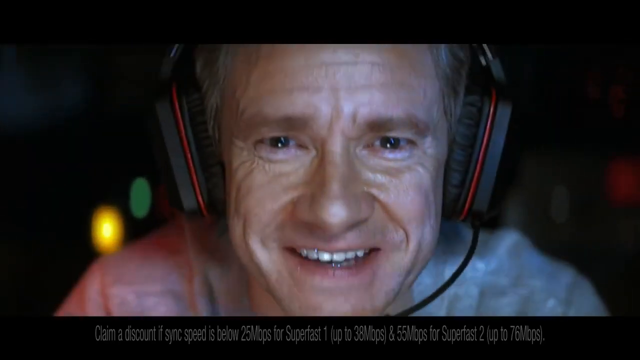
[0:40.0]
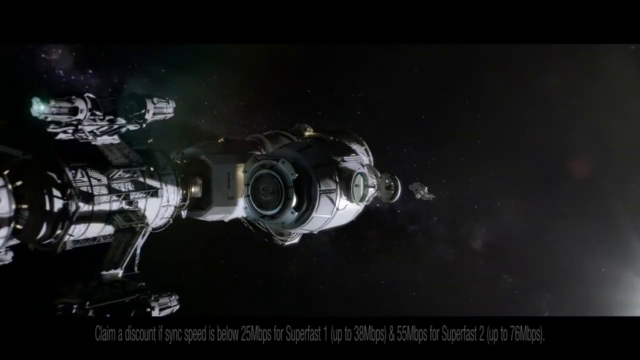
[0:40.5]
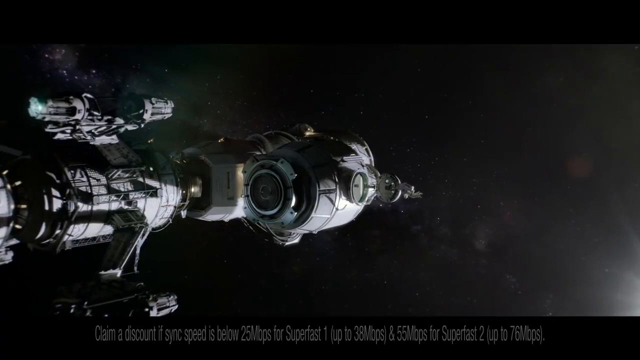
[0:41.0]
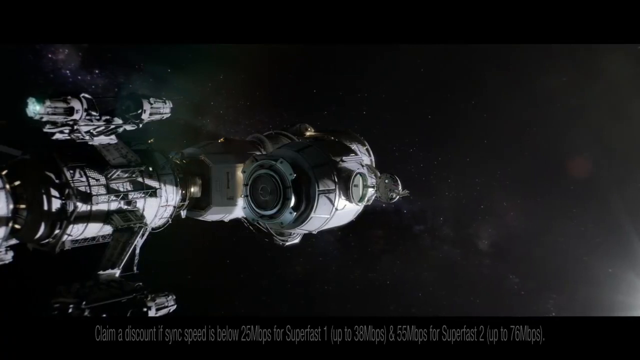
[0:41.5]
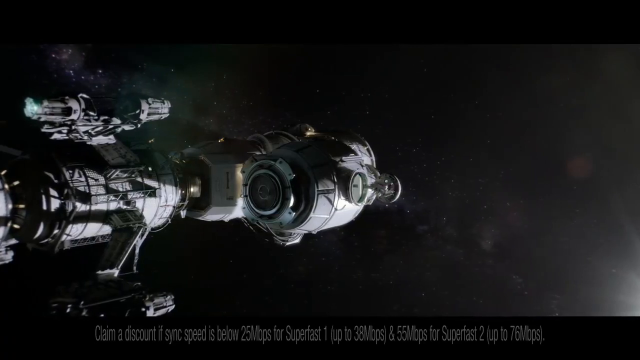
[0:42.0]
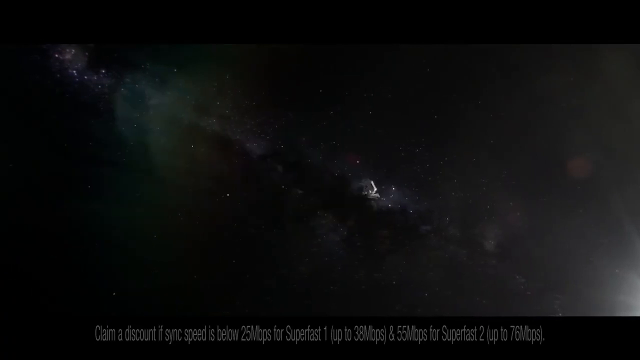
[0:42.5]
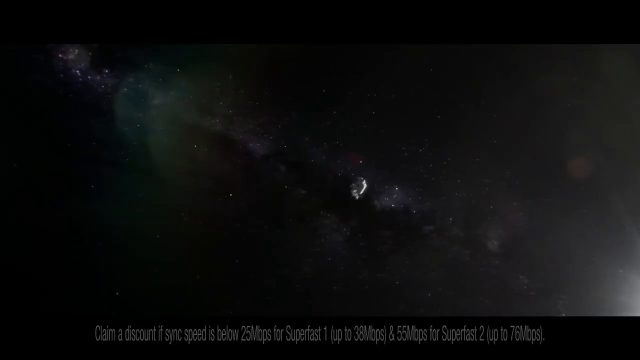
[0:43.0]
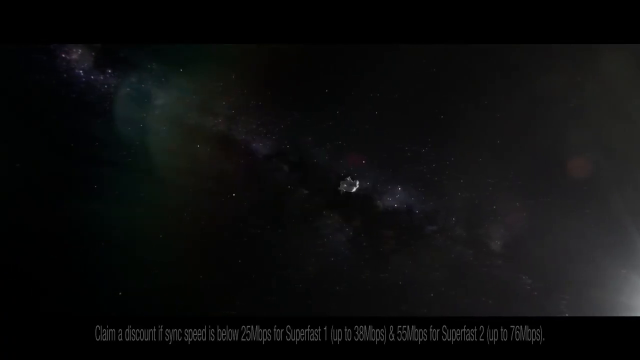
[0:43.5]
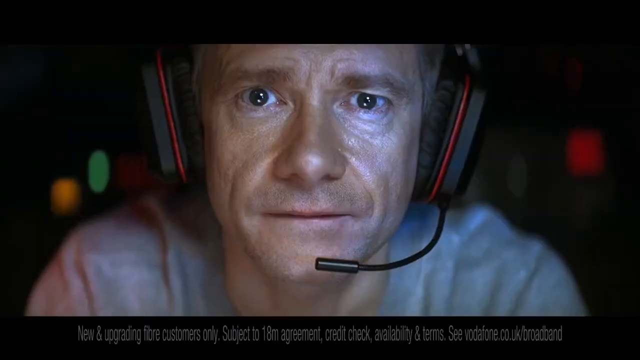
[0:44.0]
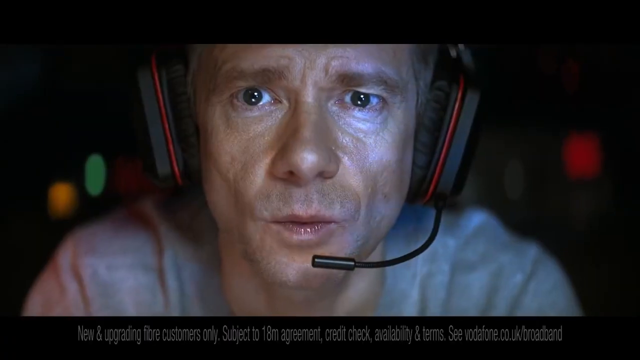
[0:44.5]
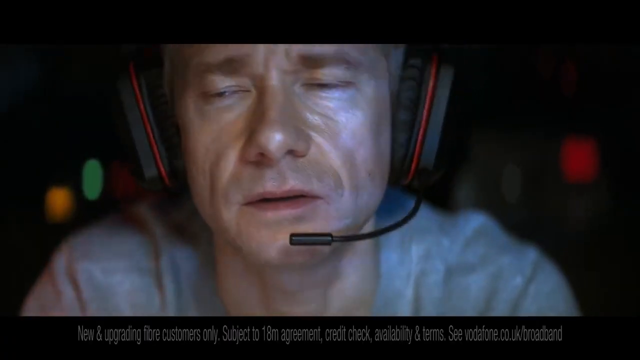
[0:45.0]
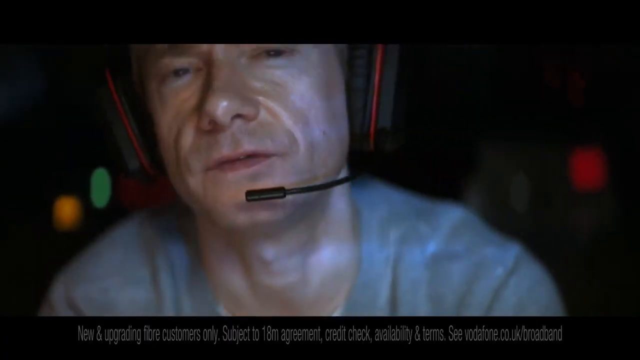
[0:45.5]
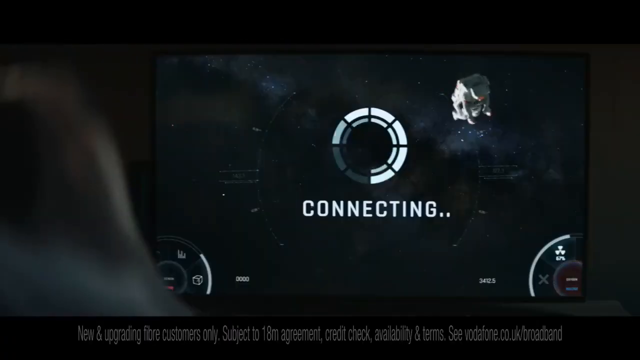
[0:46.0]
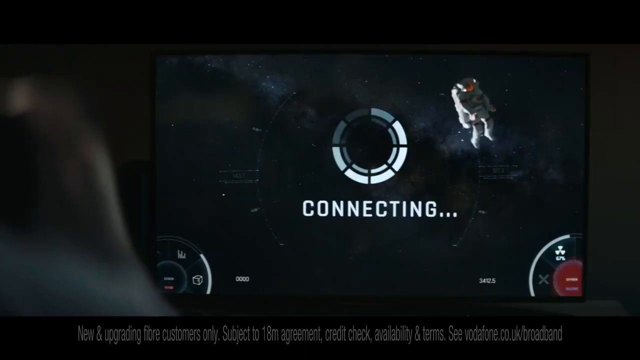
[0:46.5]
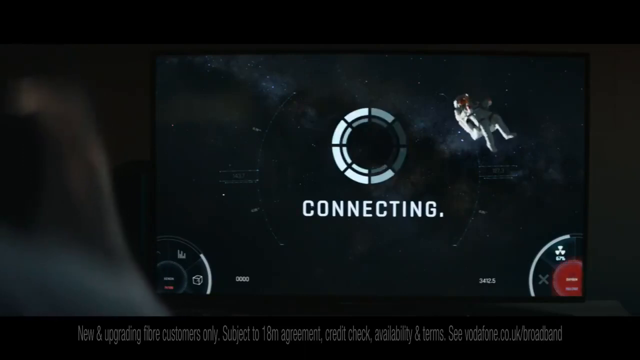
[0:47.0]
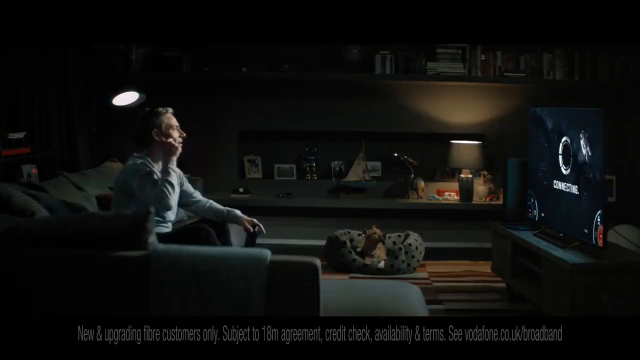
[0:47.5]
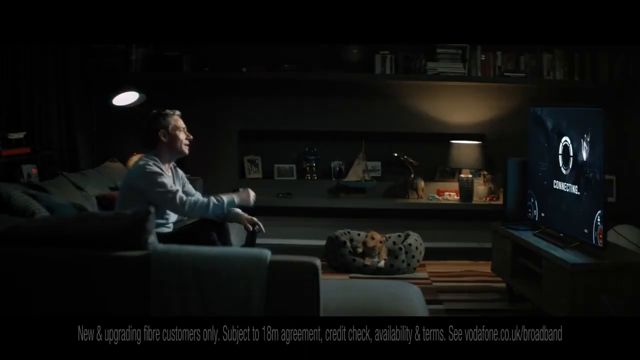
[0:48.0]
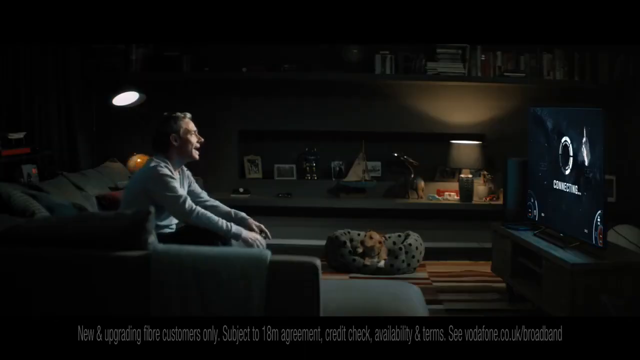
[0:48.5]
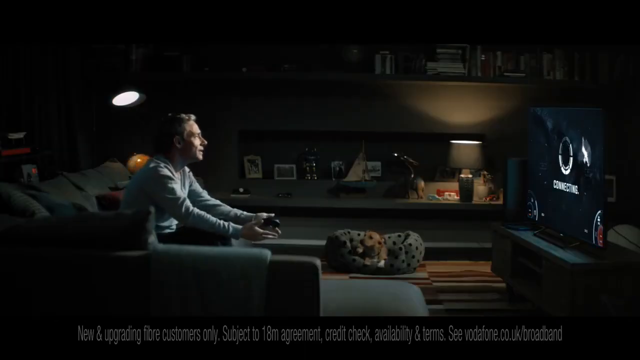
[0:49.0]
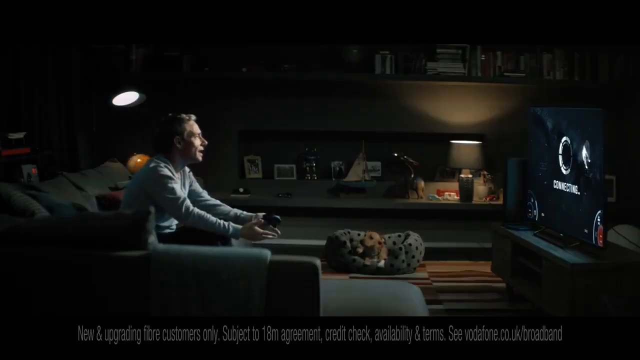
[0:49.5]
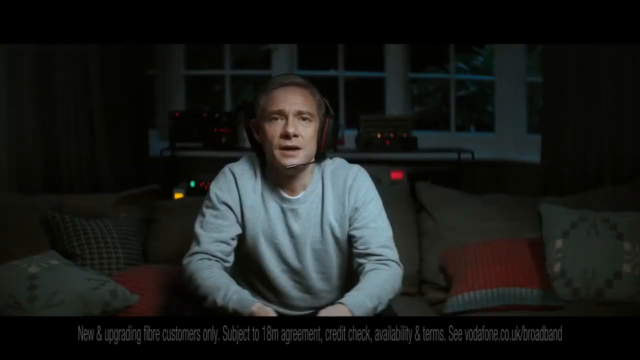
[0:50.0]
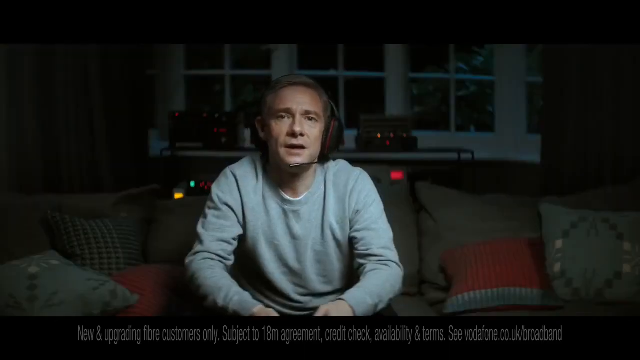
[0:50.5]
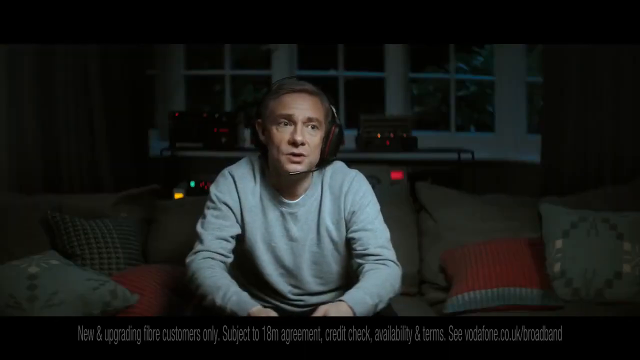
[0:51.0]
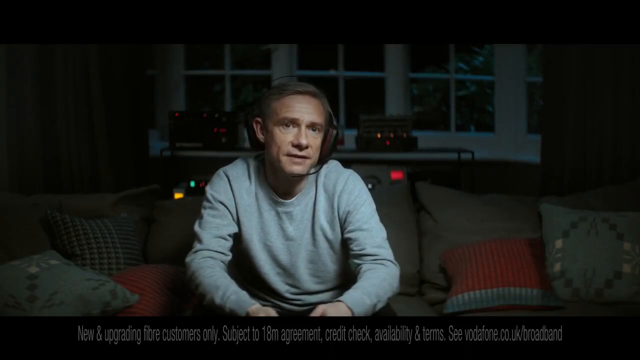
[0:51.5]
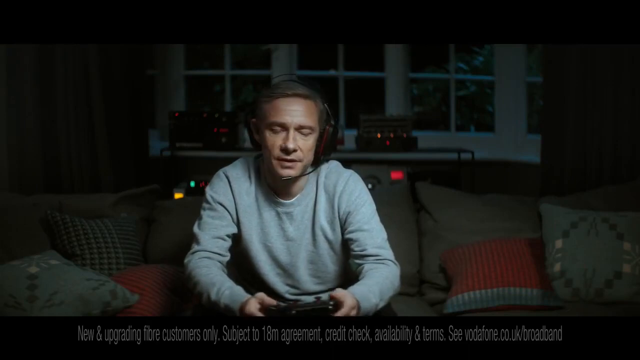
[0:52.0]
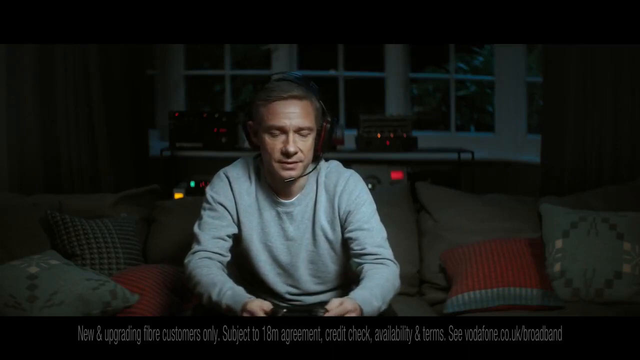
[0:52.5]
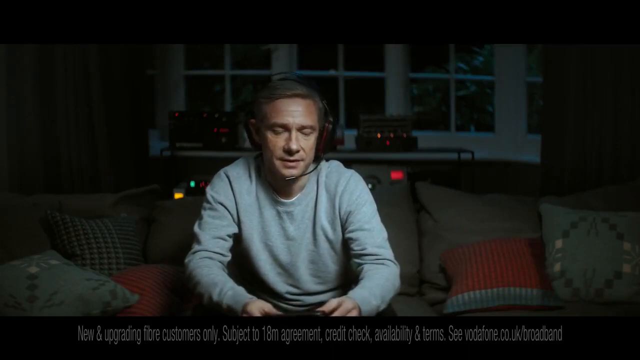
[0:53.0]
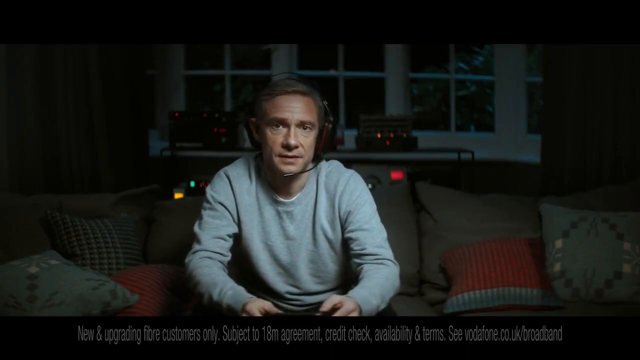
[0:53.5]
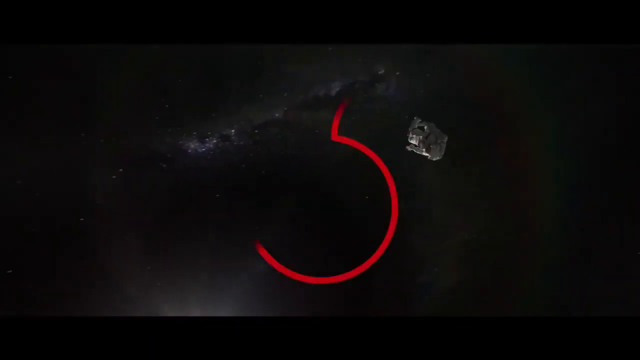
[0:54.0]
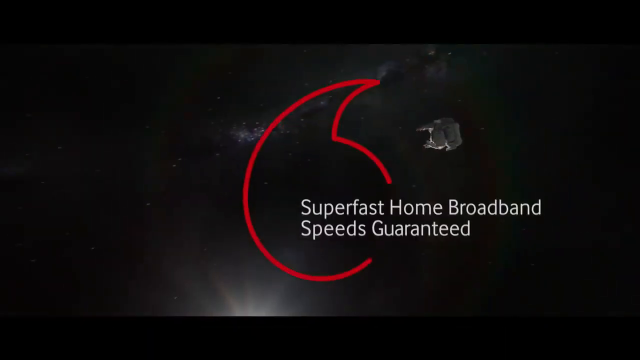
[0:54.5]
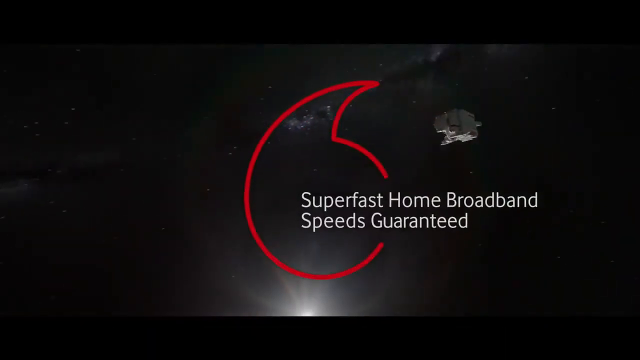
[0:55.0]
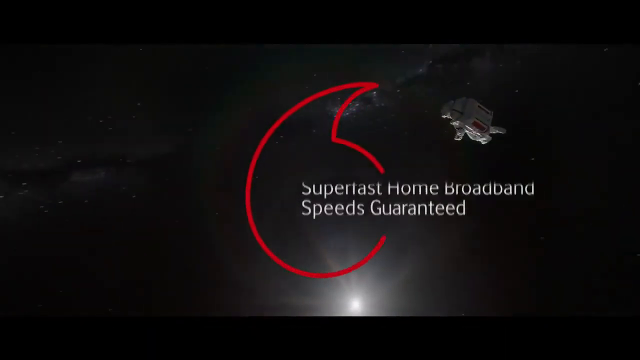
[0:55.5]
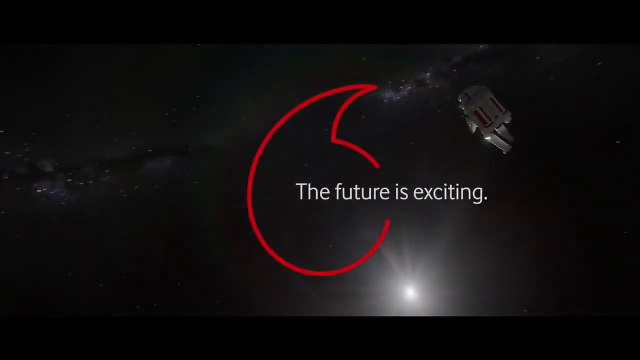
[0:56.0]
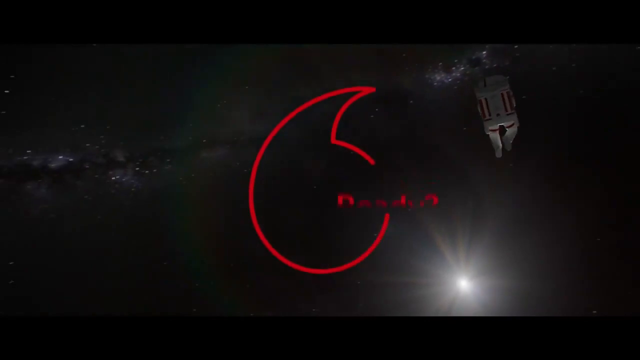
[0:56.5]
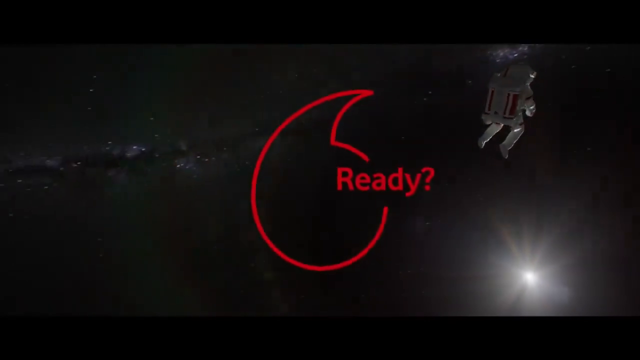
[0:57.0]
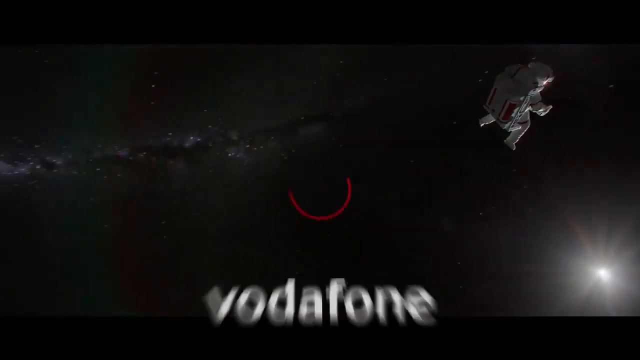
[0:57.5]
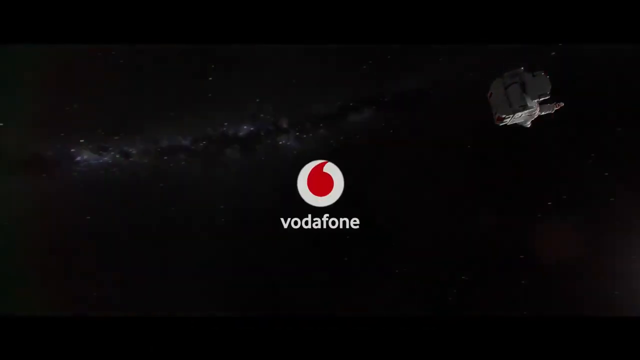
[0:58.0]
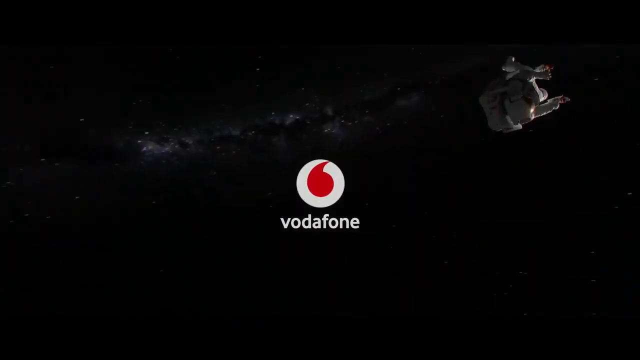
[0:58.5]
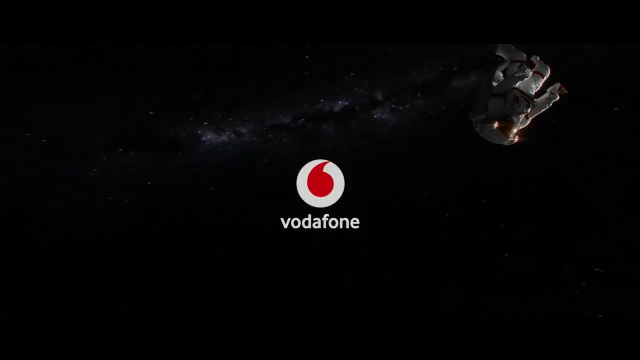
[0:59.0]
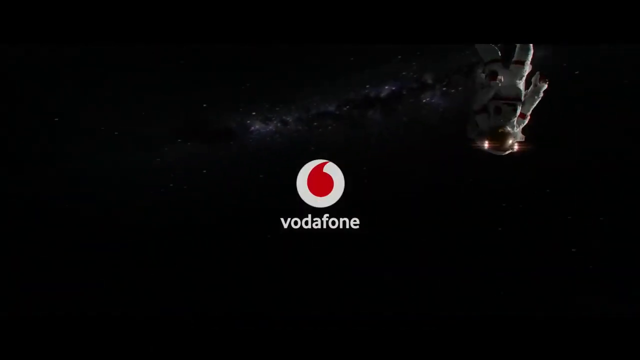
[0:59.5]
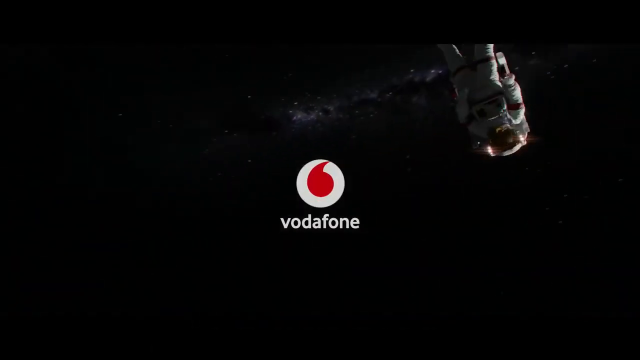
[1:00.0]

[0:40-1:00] The man inside the spaceship looks like he is at a control panel, wearing headphones with a microphone attached, looking intently forward at the man in the spacesuit, who is closer to the spaceship. As the spaceman gets right next to the spaceship, it looks like the spaceship disappears. A television screen then shows the man in the spacesuit tumbling around, with "connecting" in the center of the screen, apparently because the player lost his internet connection. The man is actually sitting on a couch in a living room, apparently playing a game on the TV. The ending scene reads "super fast home broadband, speeds guaranteed", and at the very end the Vodafone logo appears.